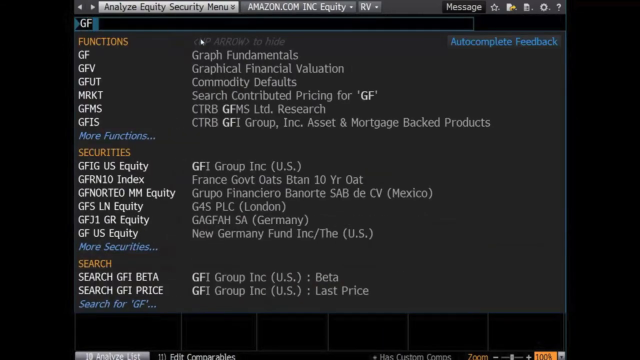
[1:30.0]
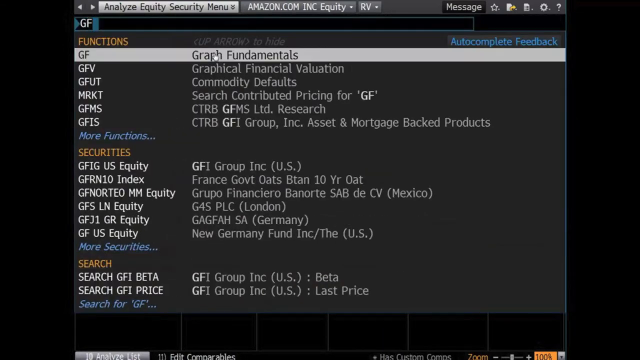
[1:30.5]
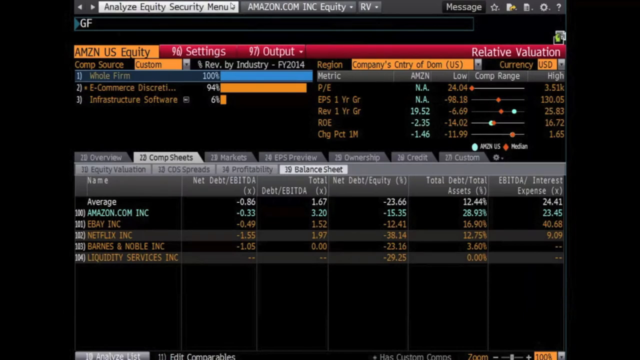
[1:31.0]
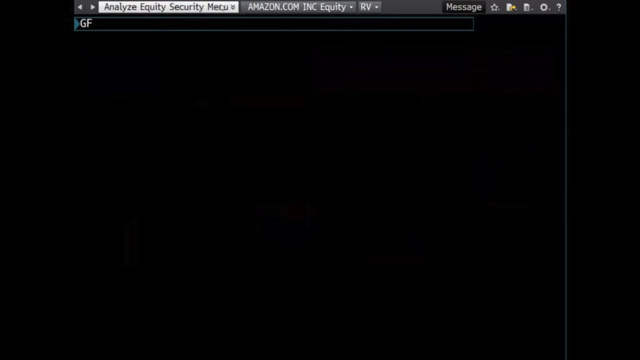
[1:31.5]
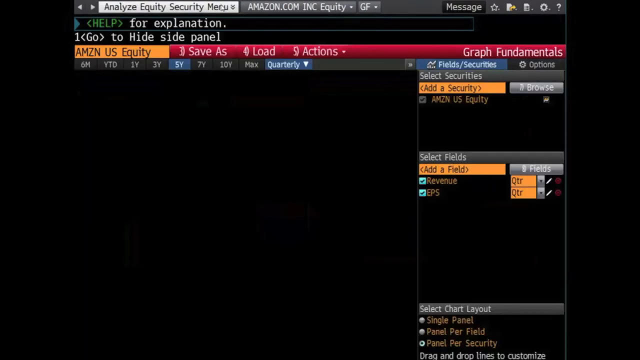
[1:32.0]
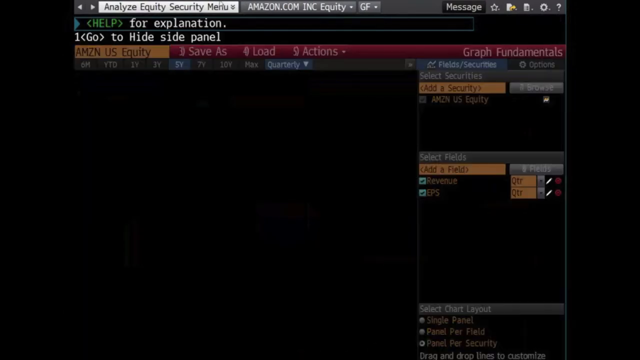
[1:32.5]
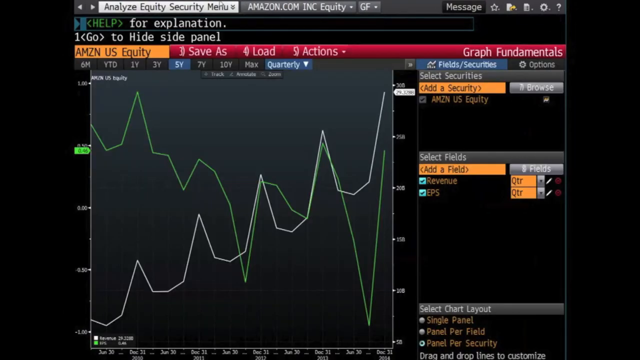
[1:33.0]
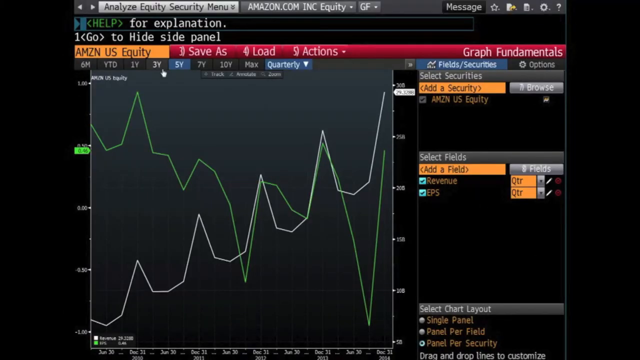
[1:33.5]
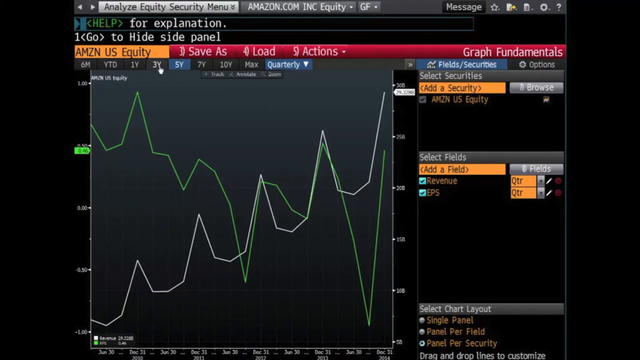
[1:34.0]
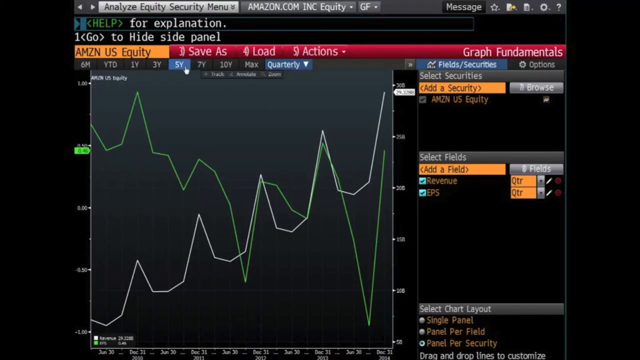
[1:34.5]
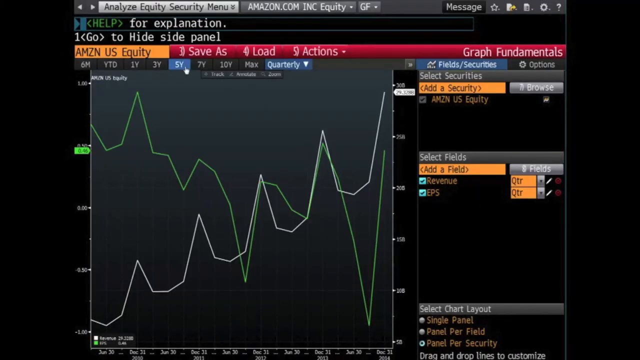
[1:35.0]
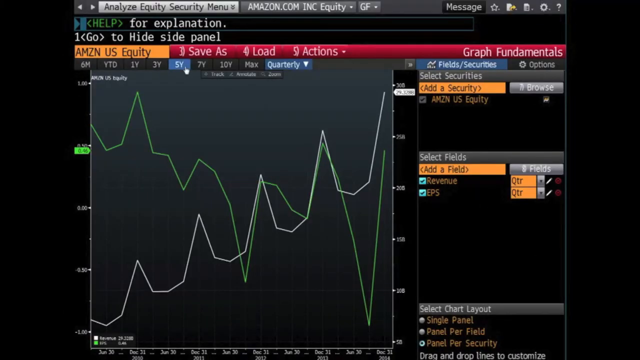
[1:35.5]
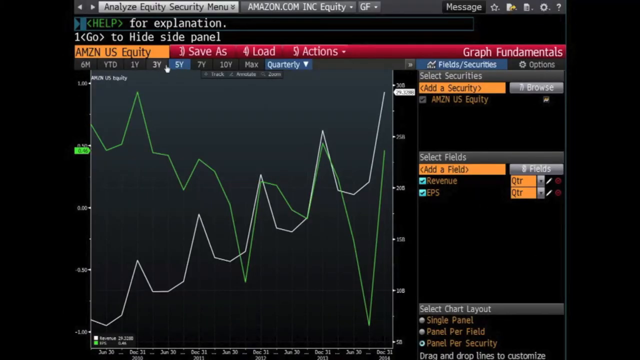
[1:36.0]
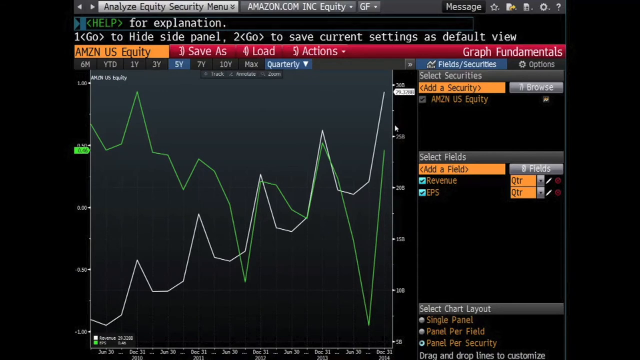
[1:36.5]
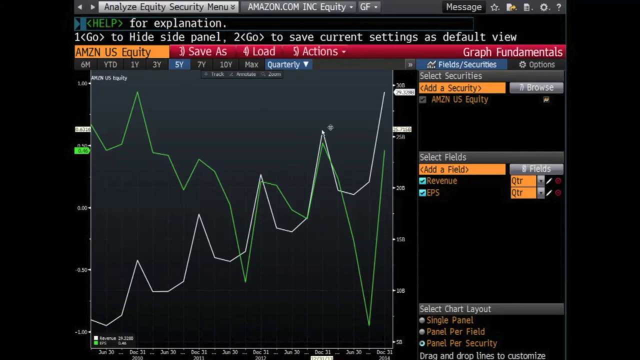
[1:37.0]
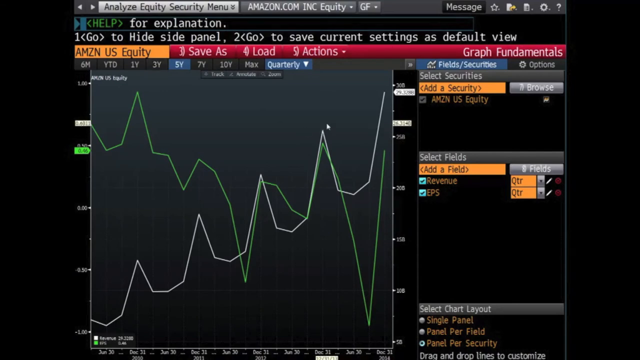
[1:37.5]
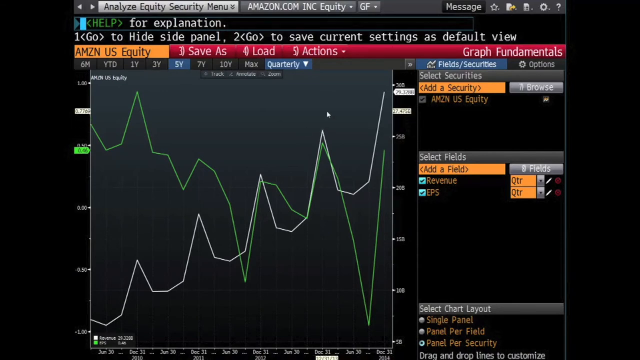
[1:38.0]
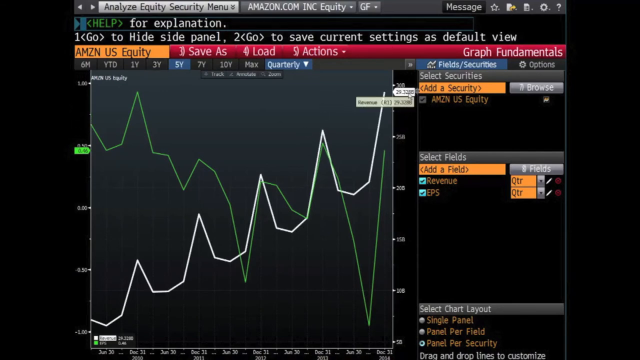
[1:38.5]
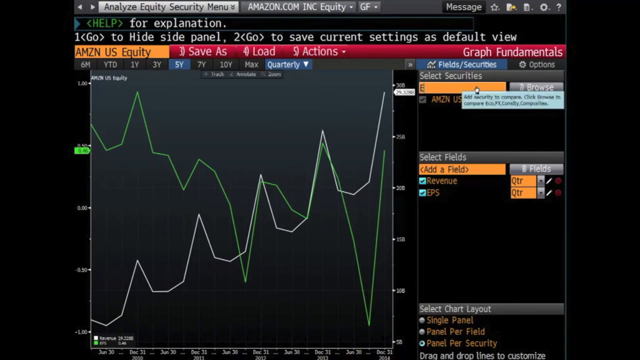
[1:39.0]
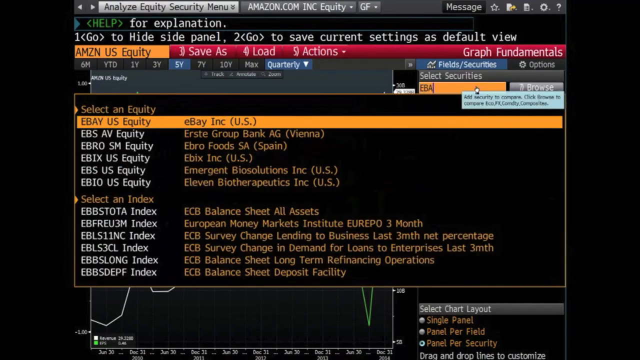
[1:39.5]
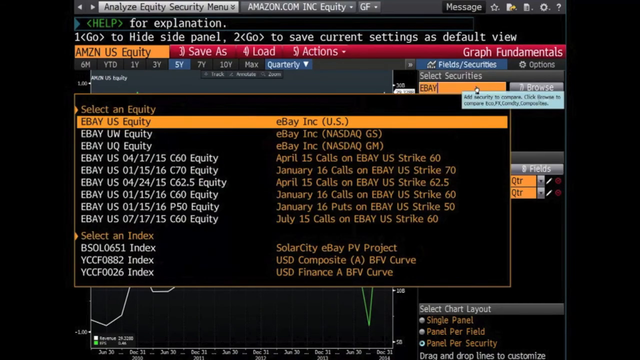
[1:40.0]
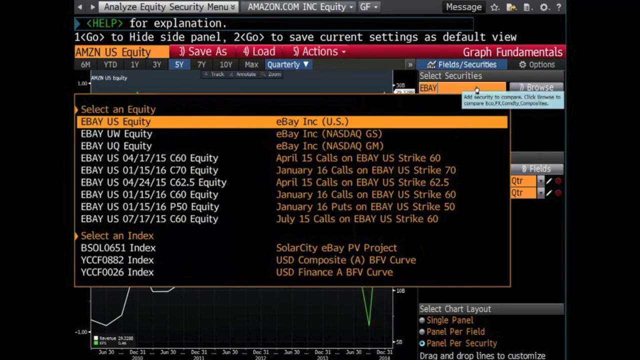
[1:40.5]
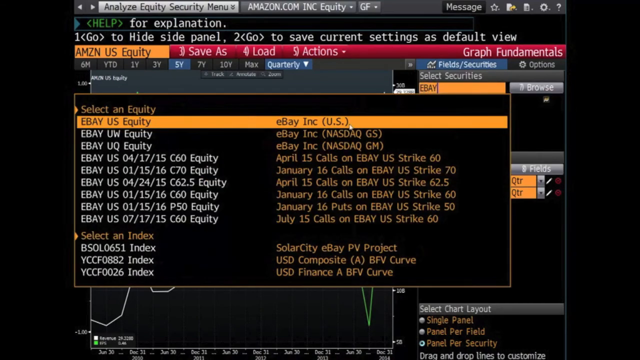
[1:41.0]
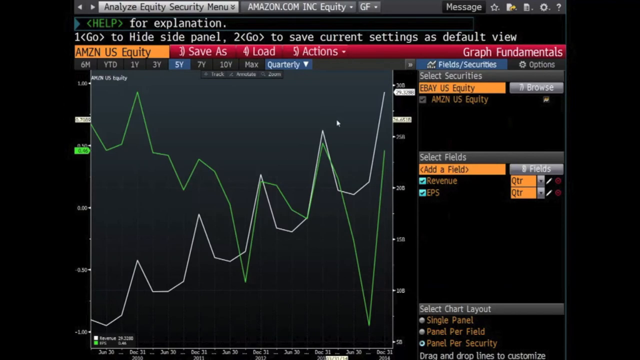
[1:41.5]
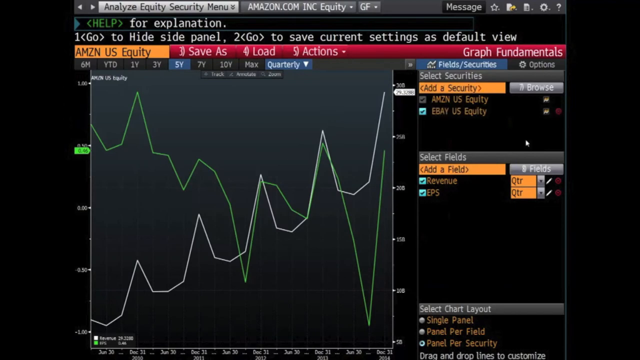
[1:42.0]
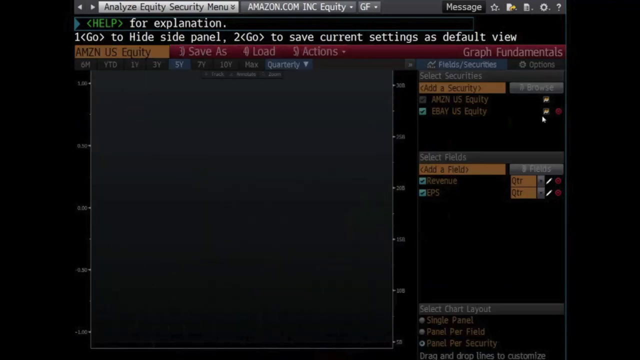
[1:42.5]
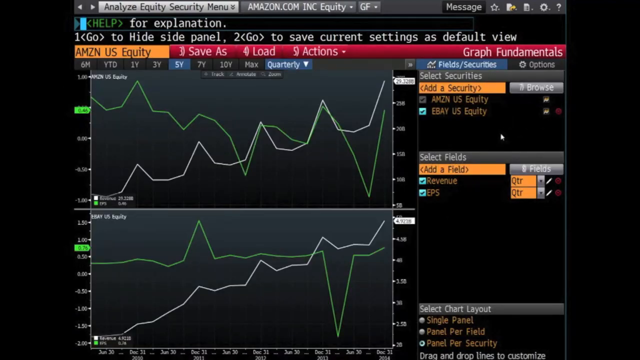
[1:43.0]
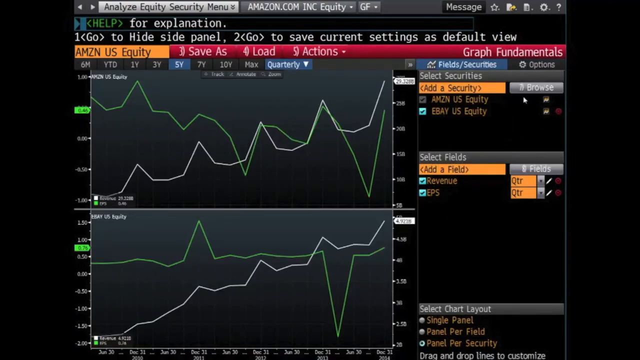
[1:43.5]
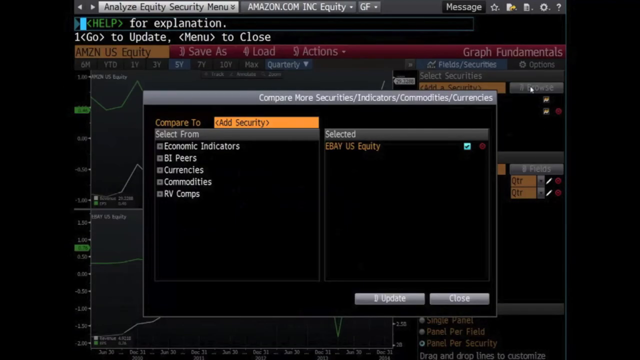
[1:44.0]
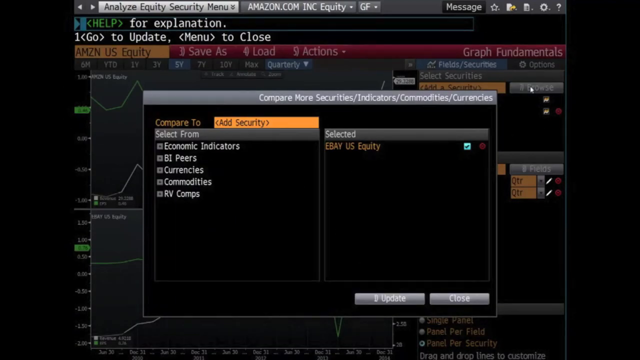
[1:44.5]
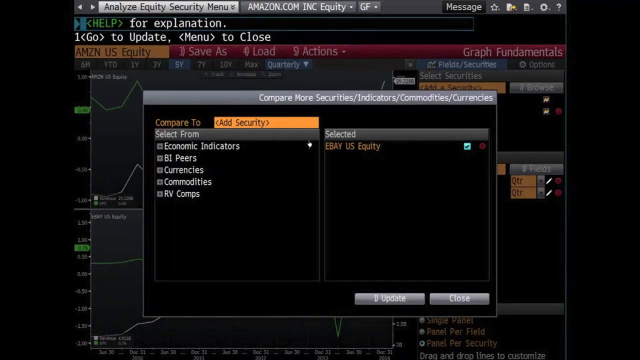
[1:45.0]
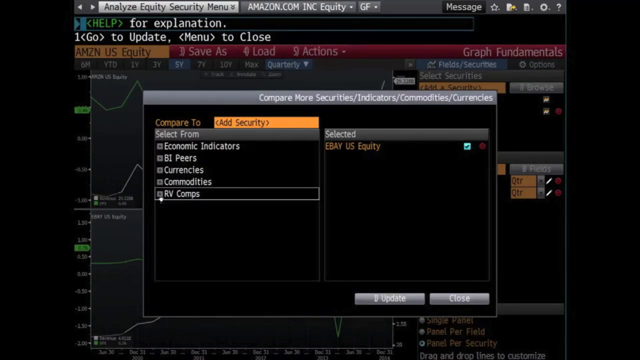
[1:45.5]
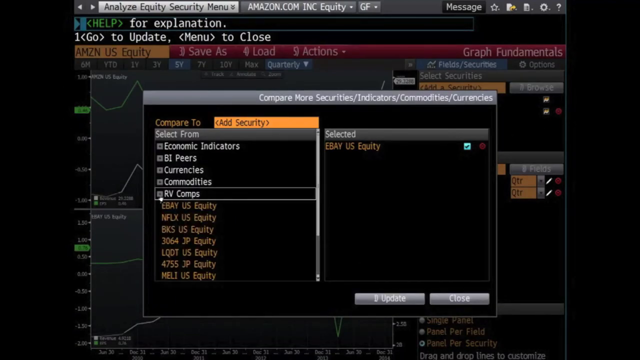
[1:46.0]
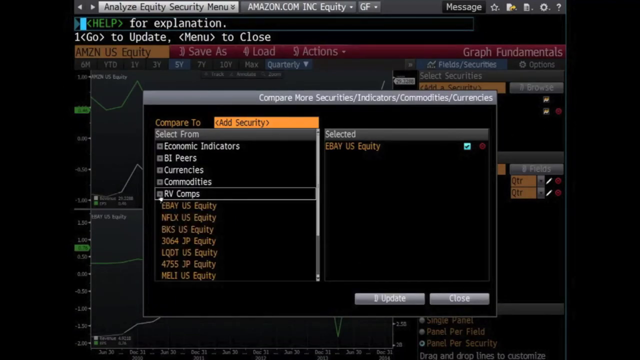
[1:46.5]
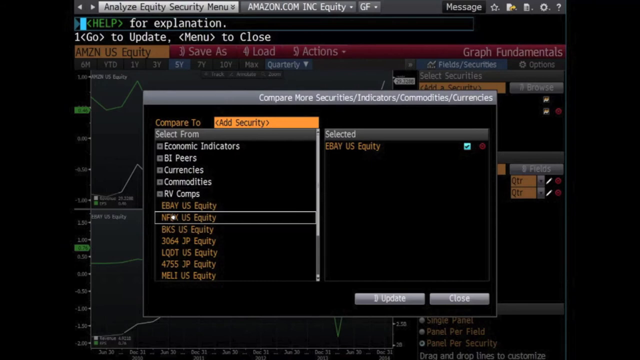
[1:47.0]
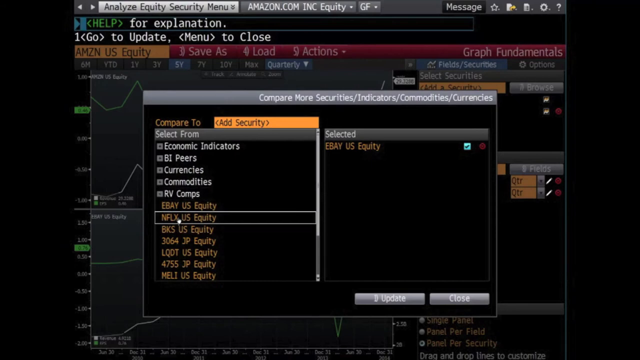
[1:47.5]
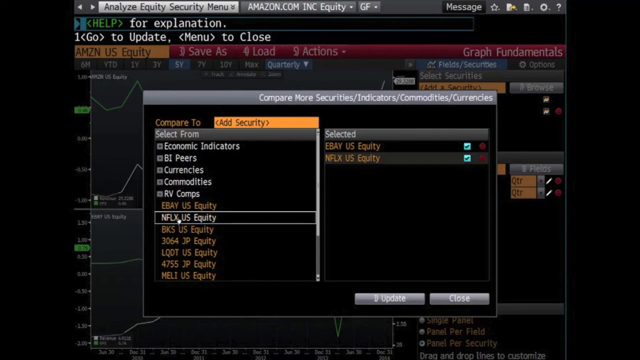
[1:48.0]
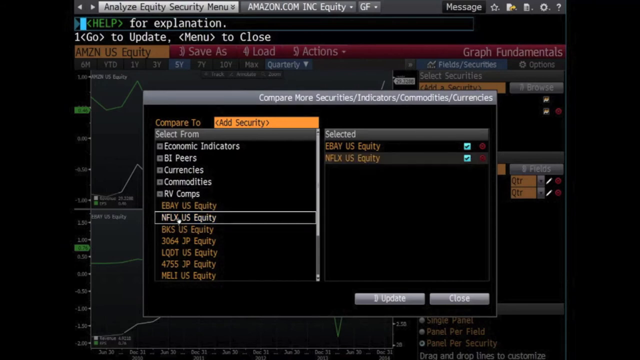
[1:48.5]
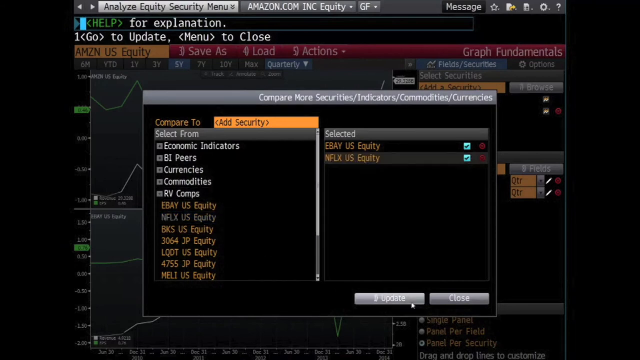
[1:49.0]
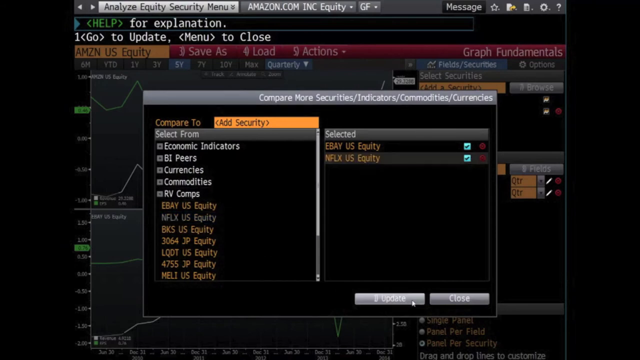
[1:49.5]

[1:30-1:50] Software that analyzes various things about companies is on screen. At the beginning, a cursor moves to a function called Graph Fundamentals, and the screen changes to Amazon US Equity, with a tab that has two fields making up a graph showing Amazon's revenue and EPS going up and down. The person using the software then adds another equity, so two equities are shown, Amazon and eBay. Another equity, Netflix, is added. All of these equities then appear on one screen, briefly, as graphs containing the fields revenue and EPS. The tool is probably for comparing those equities.